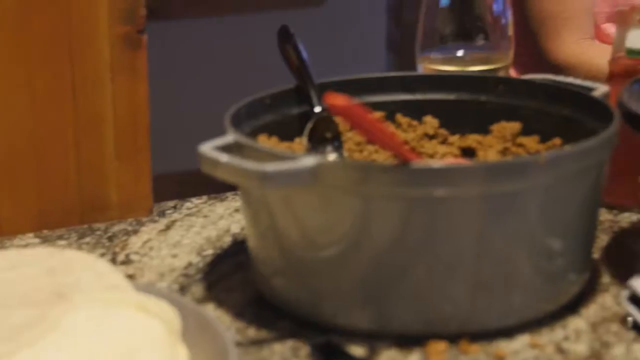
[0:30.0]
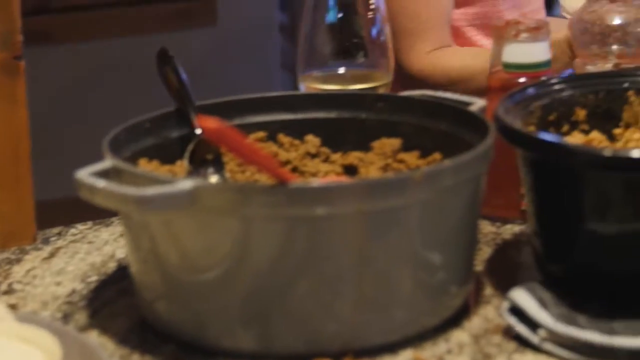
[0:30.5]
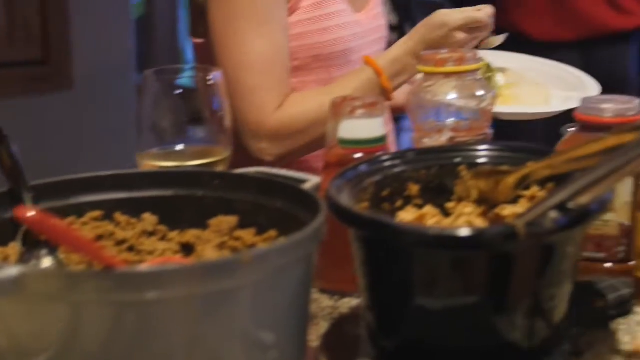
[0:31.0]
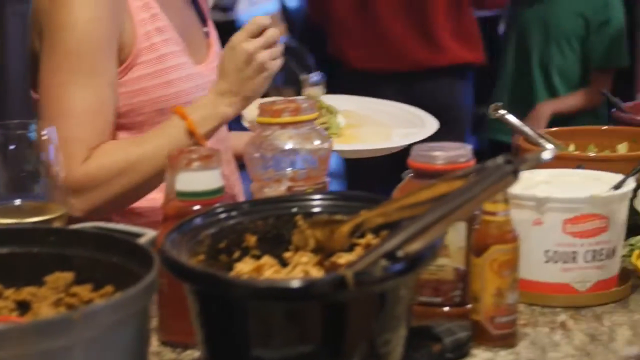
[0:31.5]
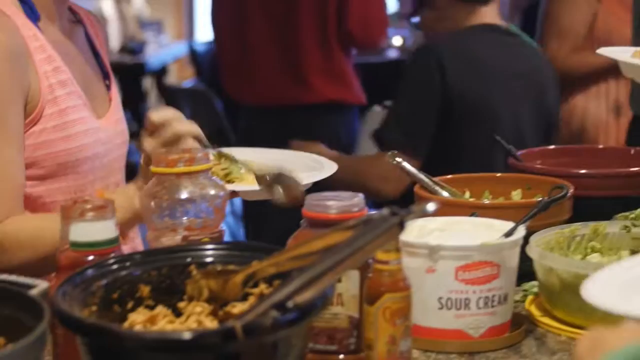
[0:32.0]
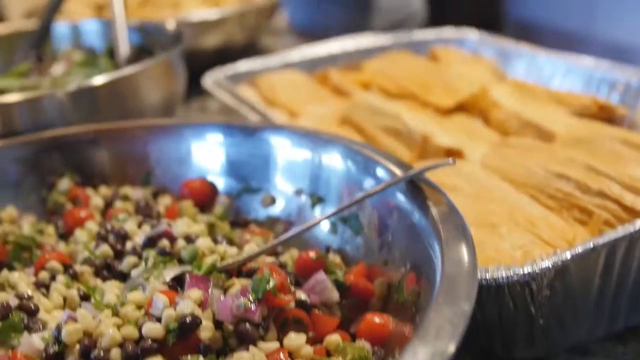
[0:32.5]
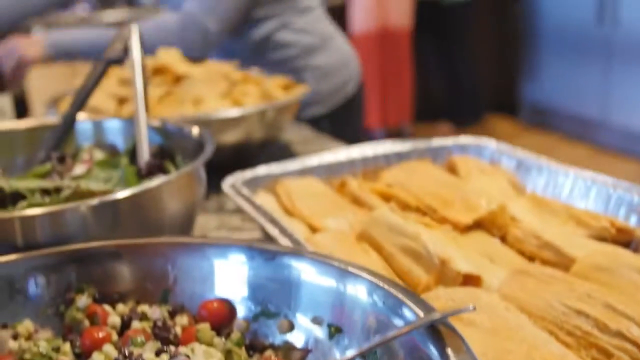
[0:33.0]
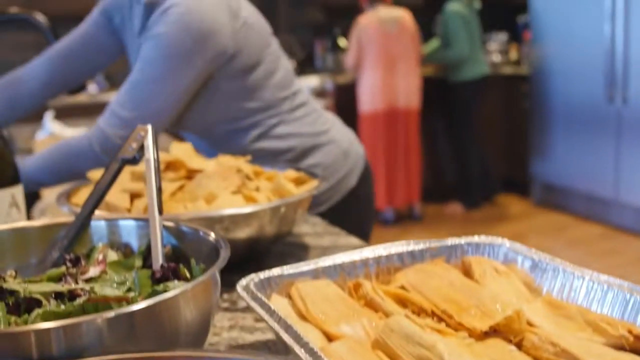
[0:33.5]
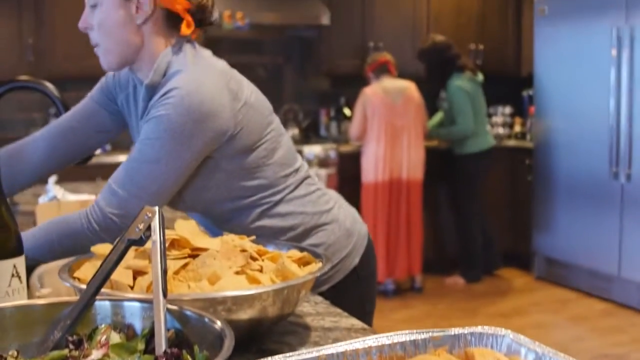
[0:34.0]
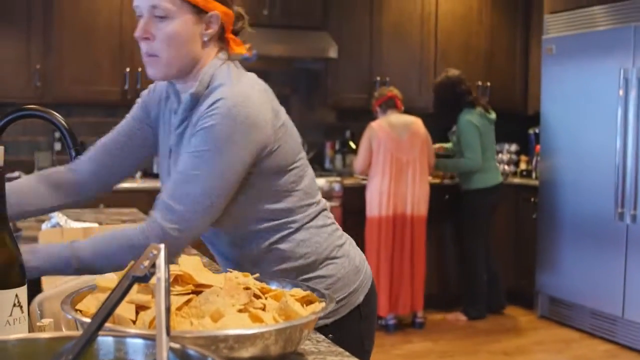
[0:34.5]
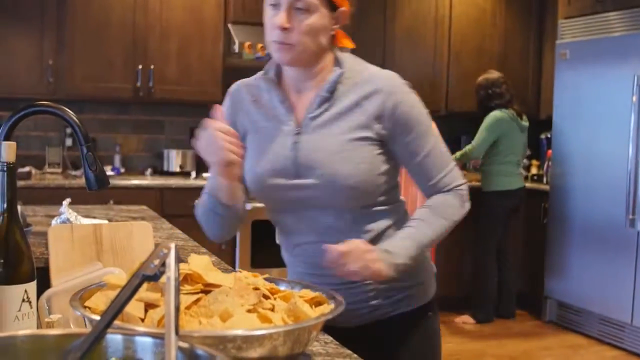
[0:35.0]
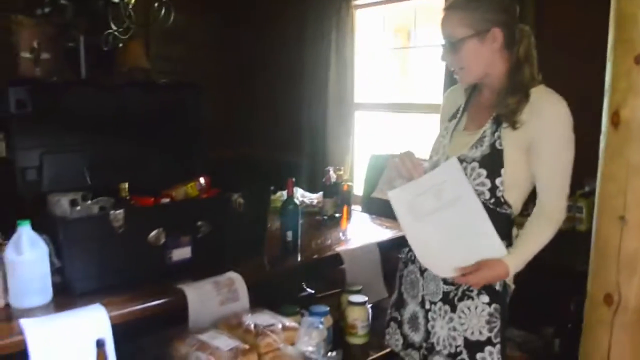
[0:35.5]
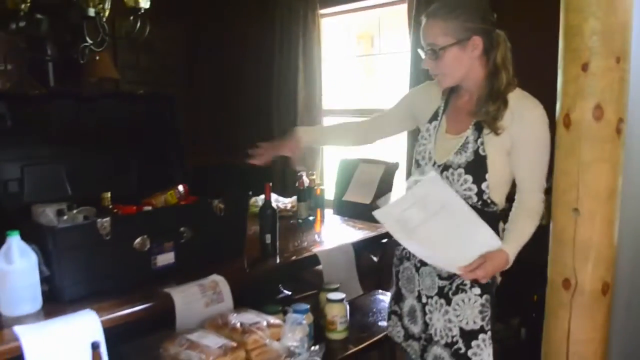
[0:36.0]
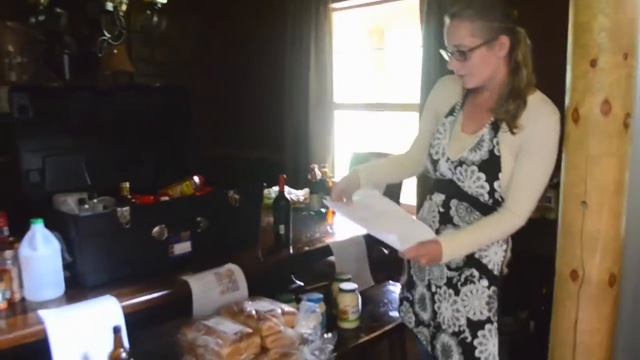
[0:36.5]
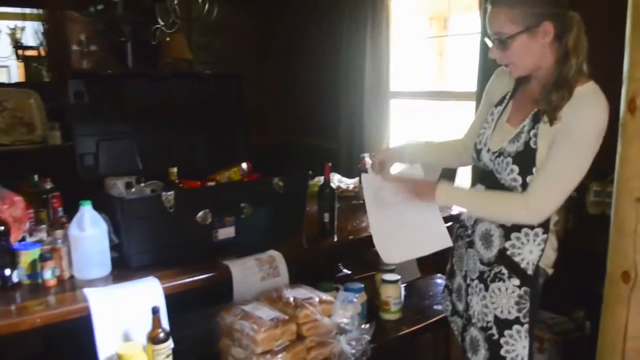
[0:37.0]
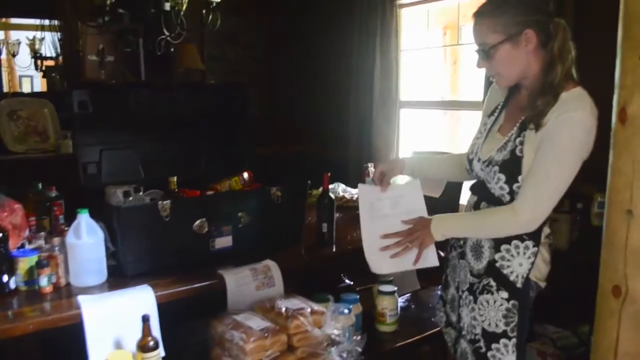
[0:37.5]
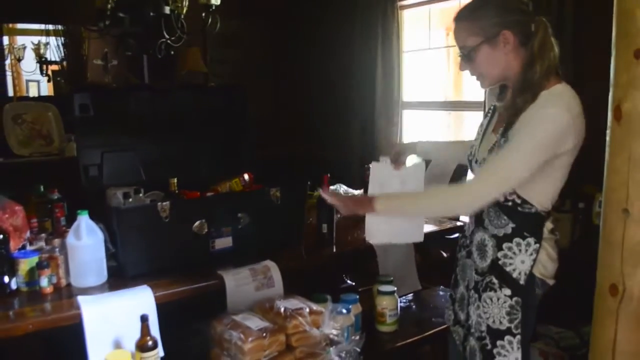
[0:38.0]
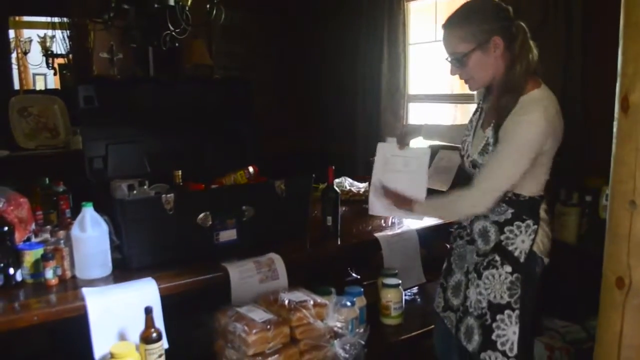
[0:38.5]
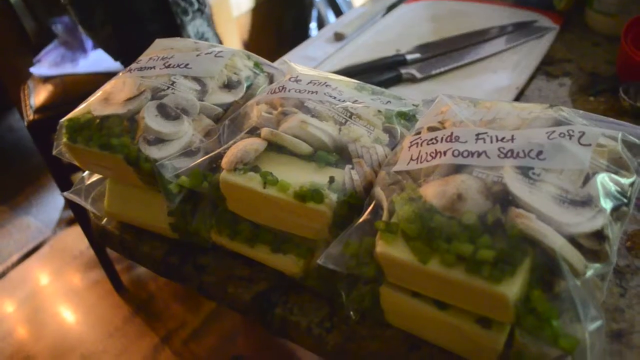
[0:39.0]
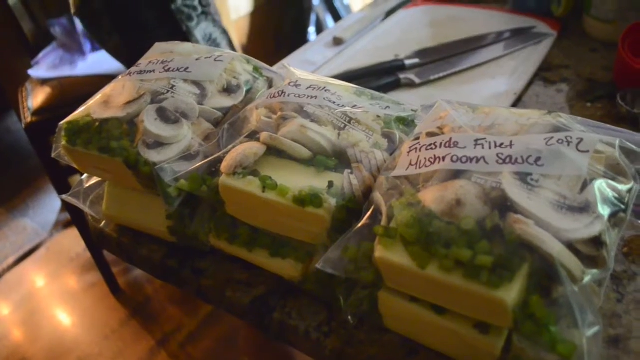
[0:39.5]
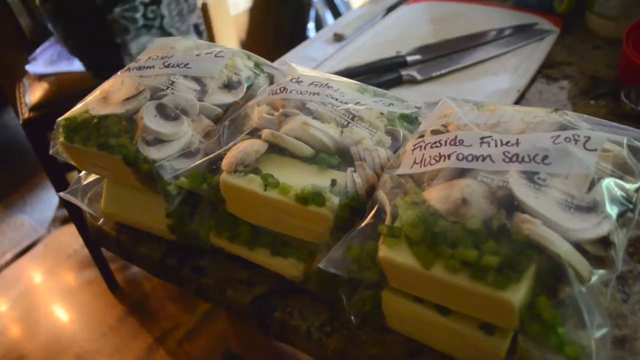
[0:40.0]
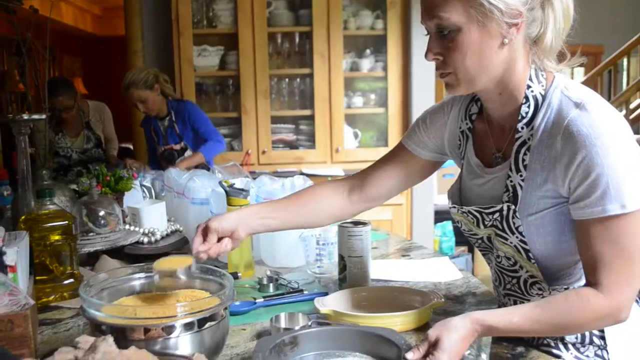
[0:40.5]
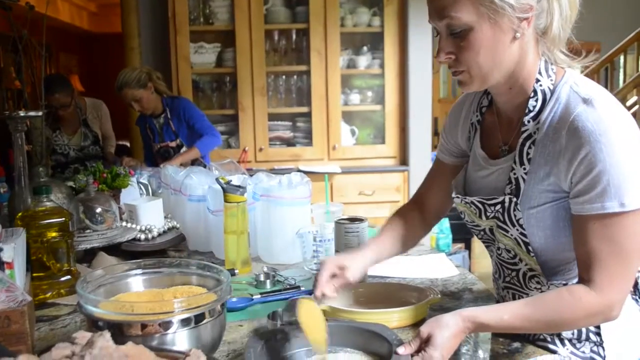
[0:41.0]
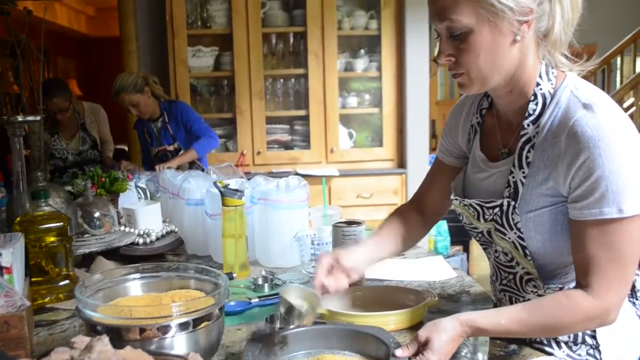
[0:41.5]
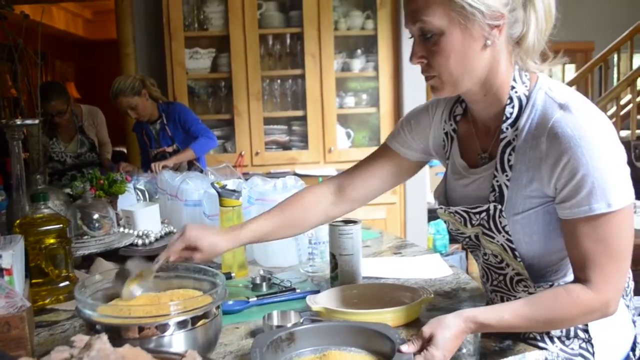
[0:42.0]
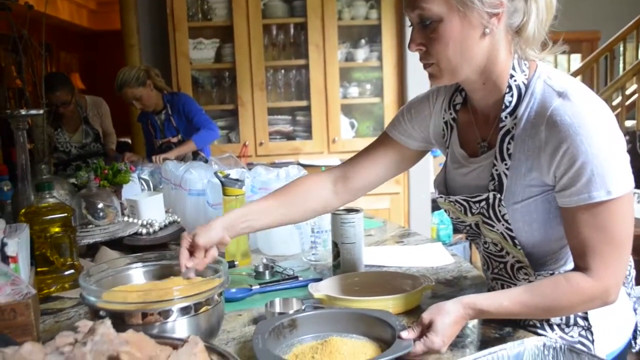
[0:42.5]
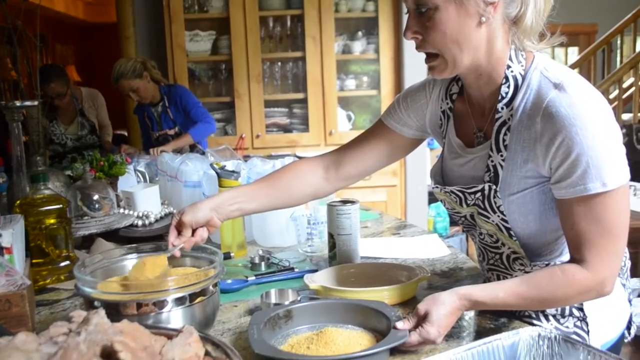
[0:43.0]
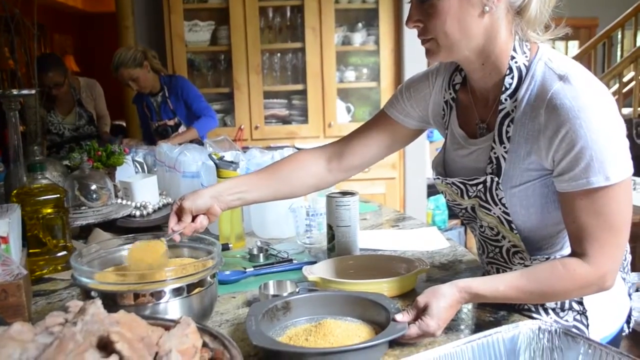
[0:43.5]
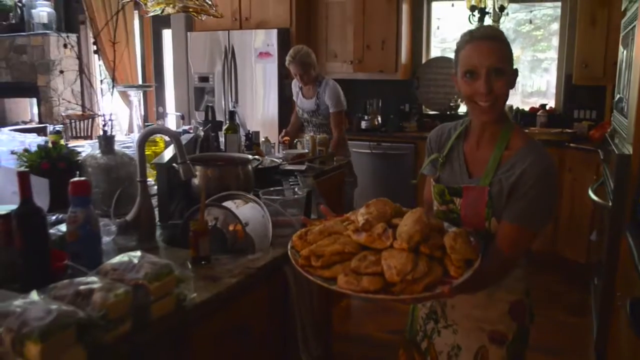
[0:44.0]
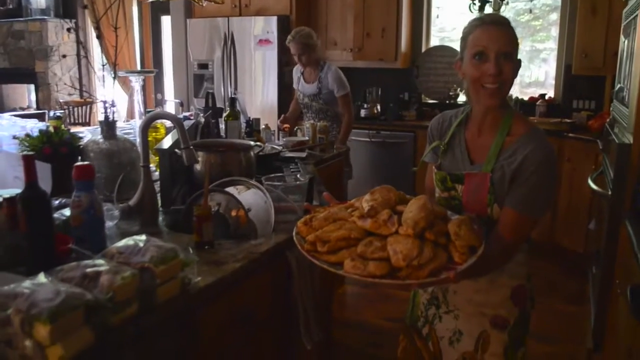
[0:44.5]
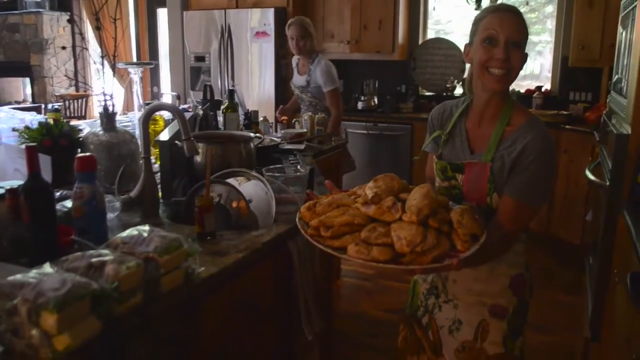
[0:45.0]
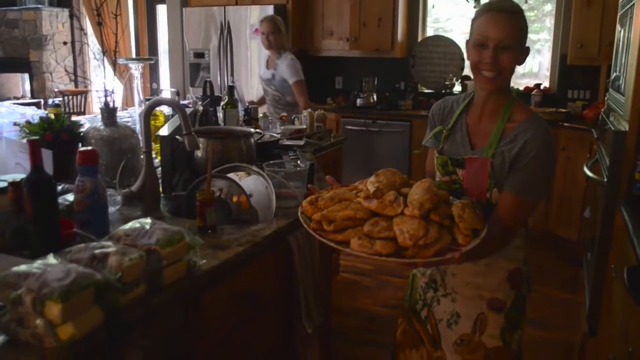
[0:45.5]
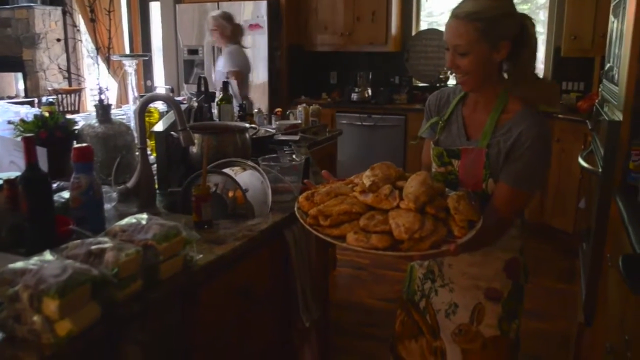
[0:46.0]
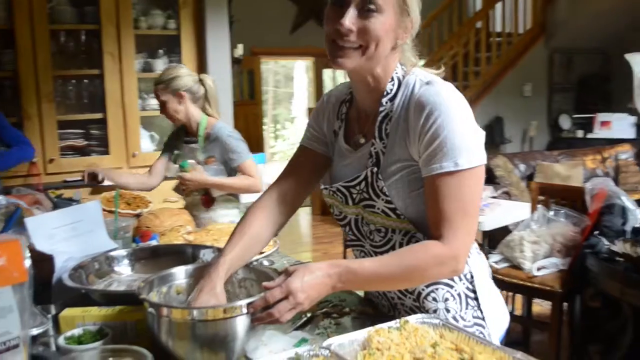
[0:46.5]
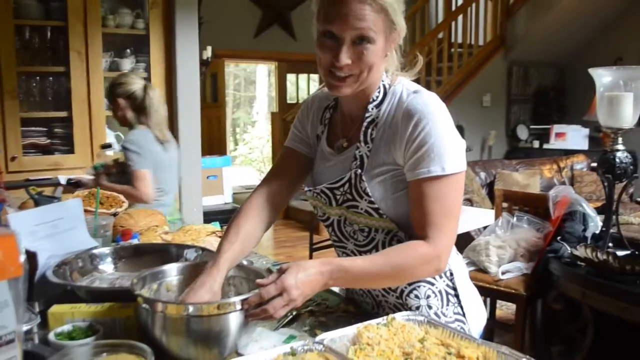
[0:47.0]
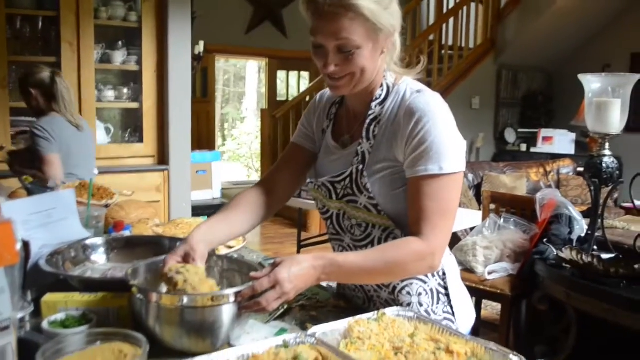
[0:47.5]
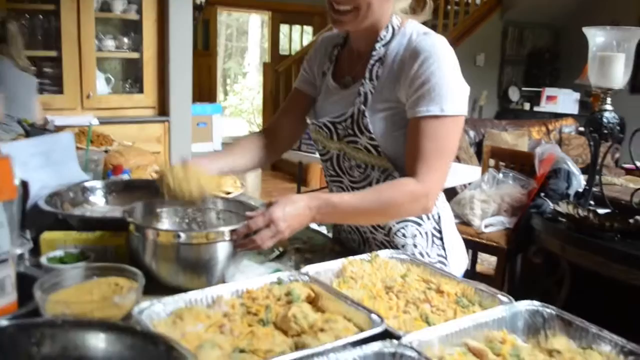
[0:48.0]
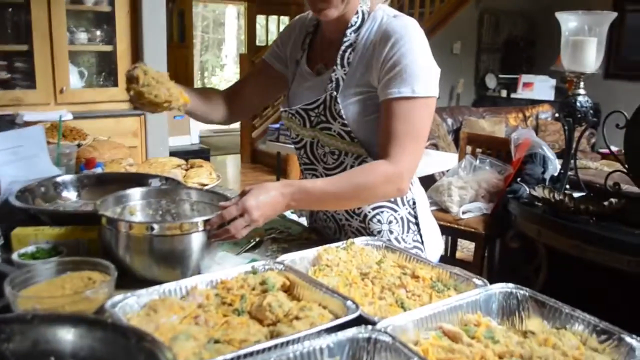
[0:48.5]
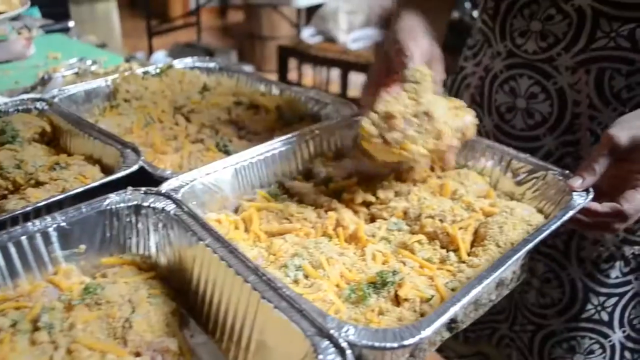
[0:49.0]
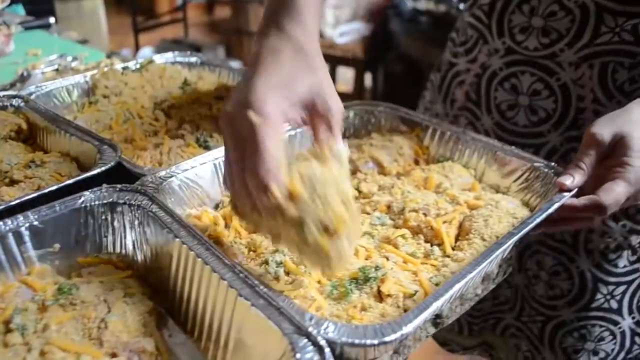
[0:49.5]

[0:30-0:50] A pot of ground beef has a black spoon and a red spoon in it, with a bottle of wine next to it. There are also enchiladas, tamales and nachos. A woman shows a paper and points at different products, while people make plates and hold them up to show the items, smiling as they make everything. A glass of white wine is on the brown and white counter. There is salsa, sour cream and some hot sauce, and a bunch of different bowls with different items, including tamales and salad. Several women are in the room. A lady at a table wears a long white shirt with a black and white dress over it; she holds a piece of paper and points. The paper says "Fireside Filet Mushroom Sauce 2 of 2" on the front and lists all the ingredients. There is a white cutting board with two black knives.